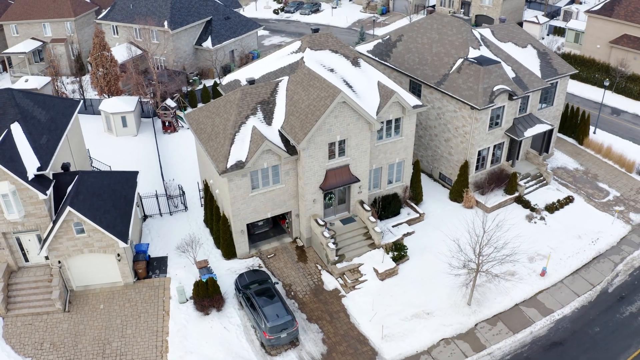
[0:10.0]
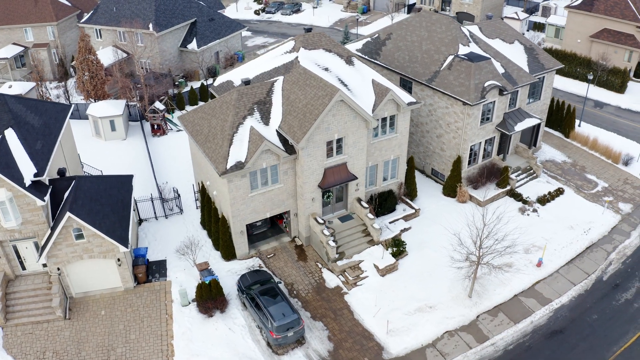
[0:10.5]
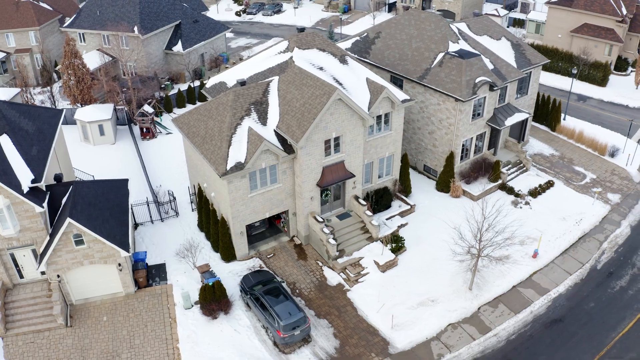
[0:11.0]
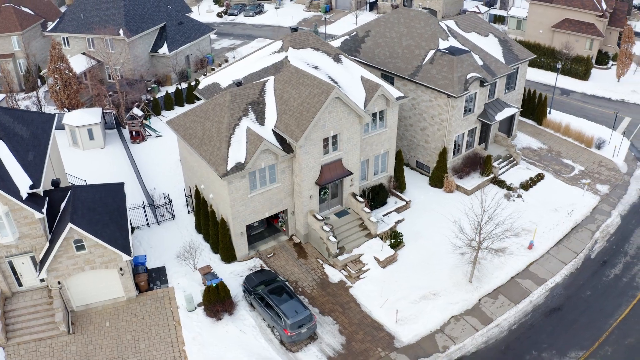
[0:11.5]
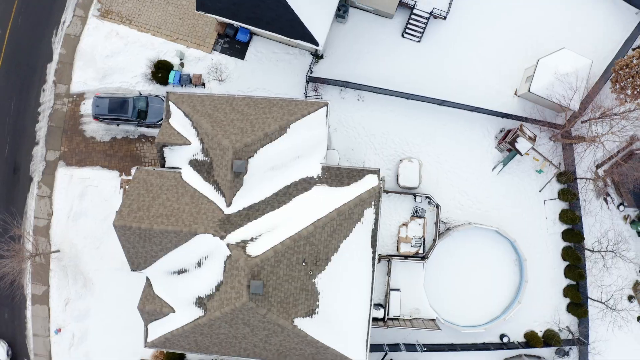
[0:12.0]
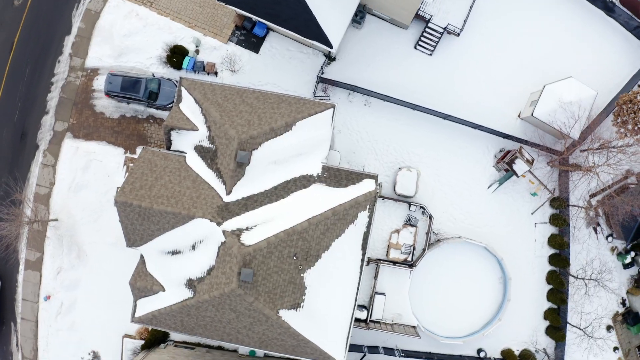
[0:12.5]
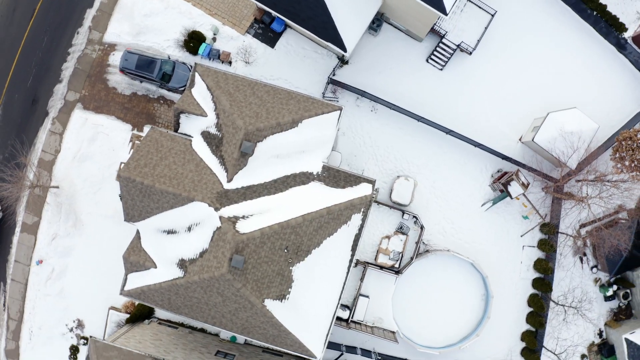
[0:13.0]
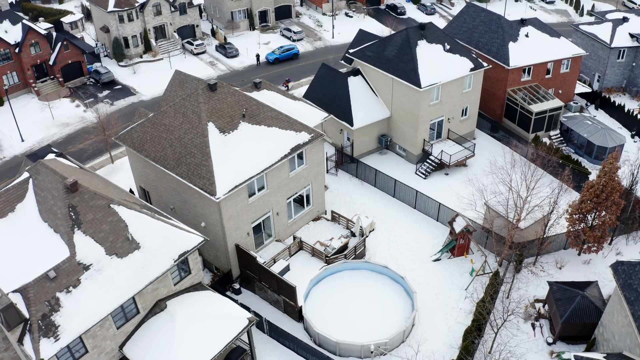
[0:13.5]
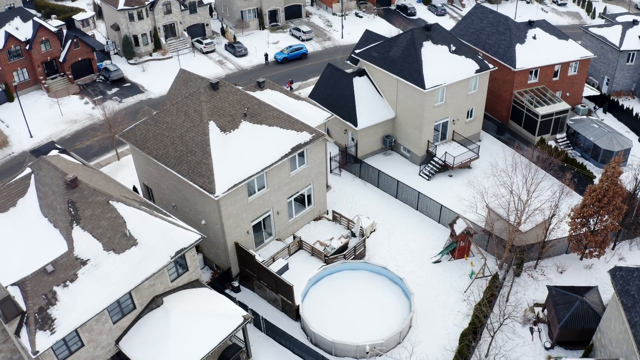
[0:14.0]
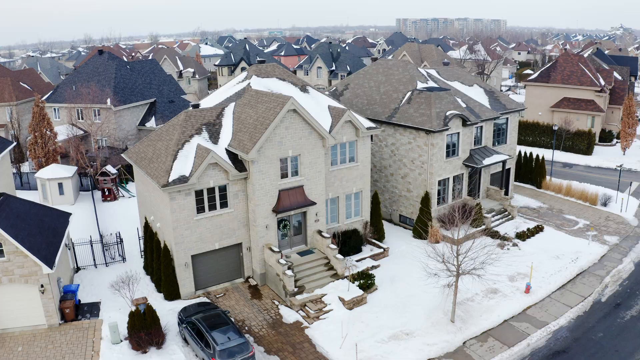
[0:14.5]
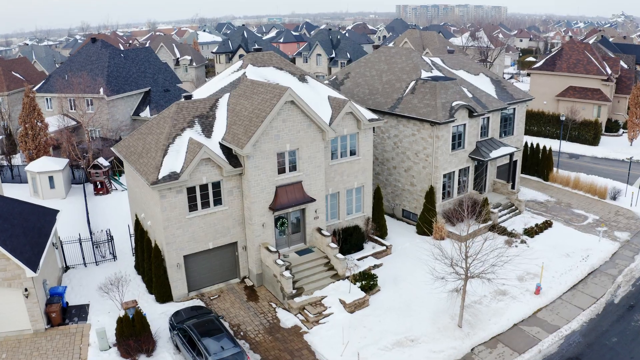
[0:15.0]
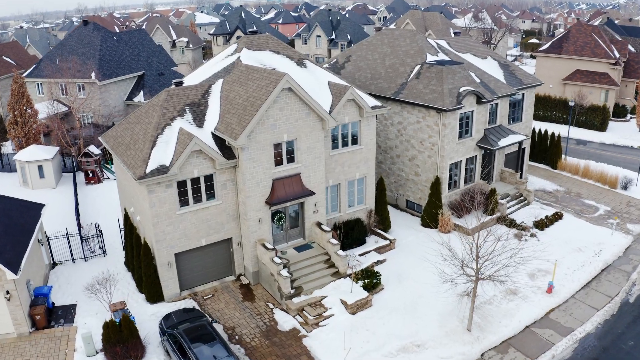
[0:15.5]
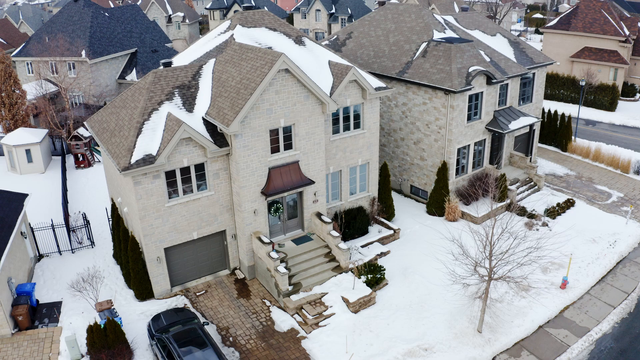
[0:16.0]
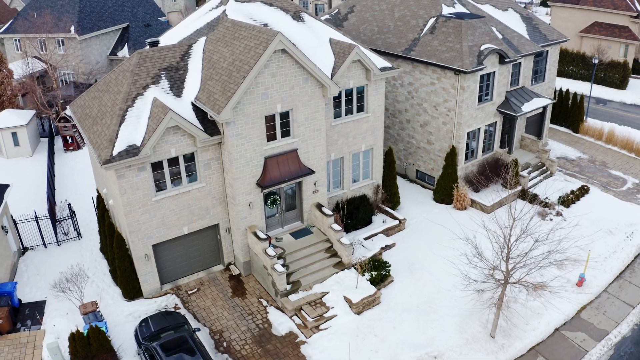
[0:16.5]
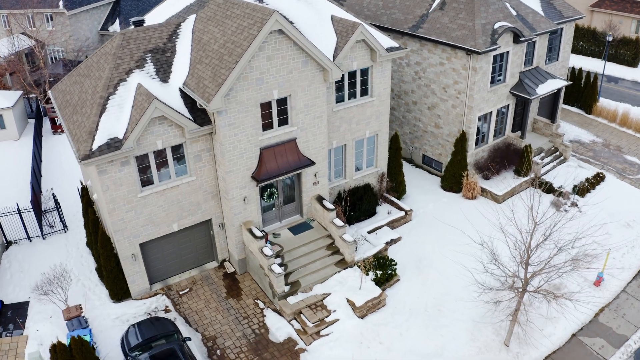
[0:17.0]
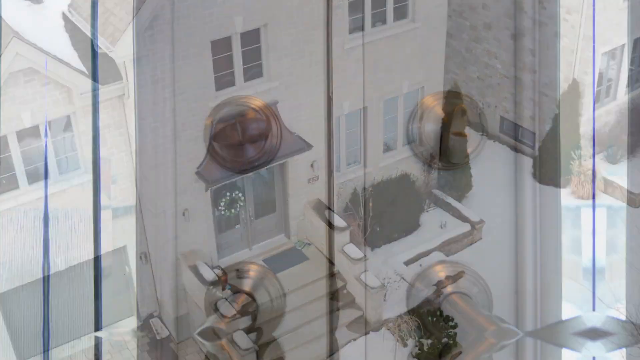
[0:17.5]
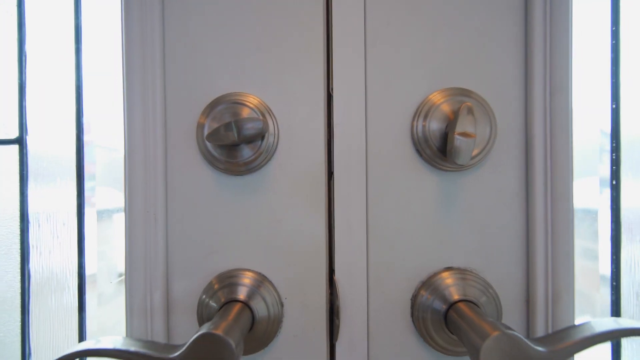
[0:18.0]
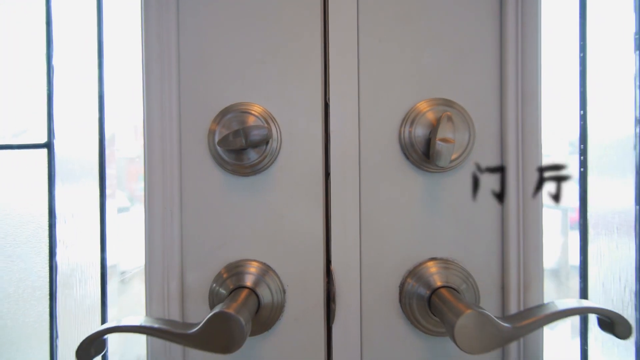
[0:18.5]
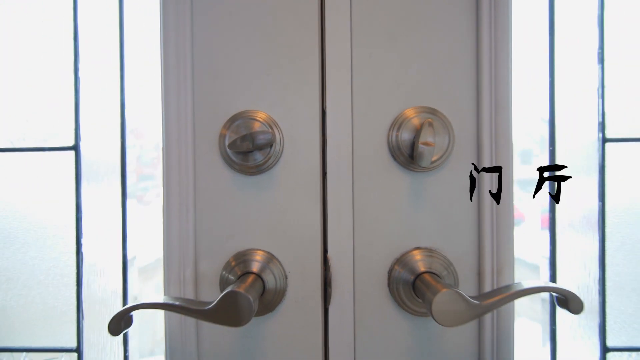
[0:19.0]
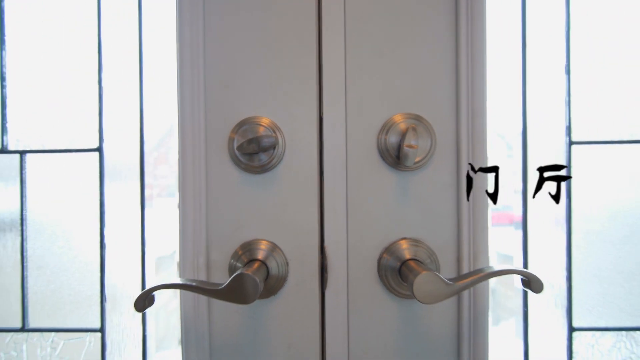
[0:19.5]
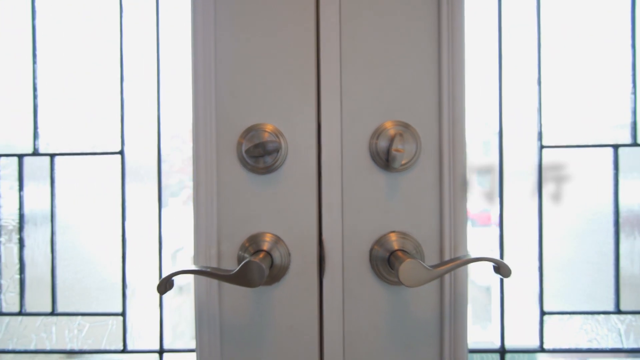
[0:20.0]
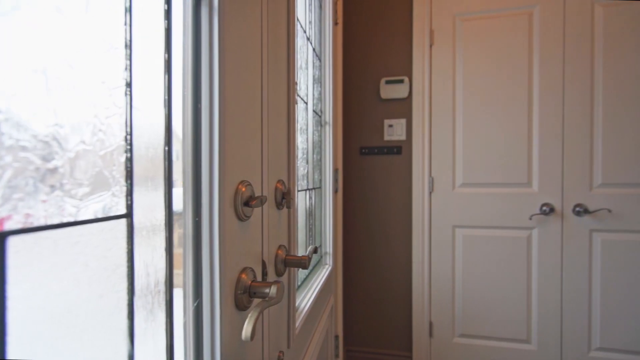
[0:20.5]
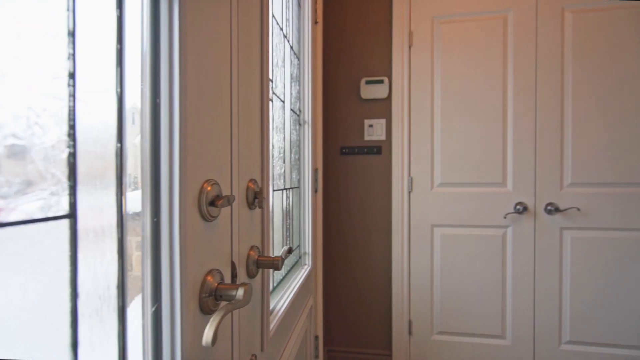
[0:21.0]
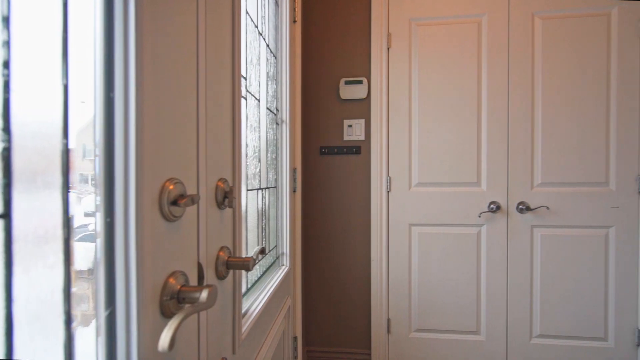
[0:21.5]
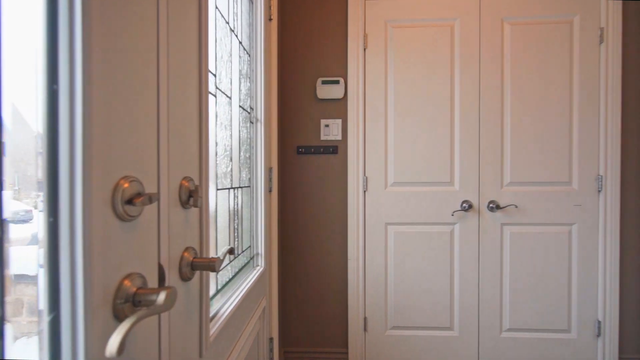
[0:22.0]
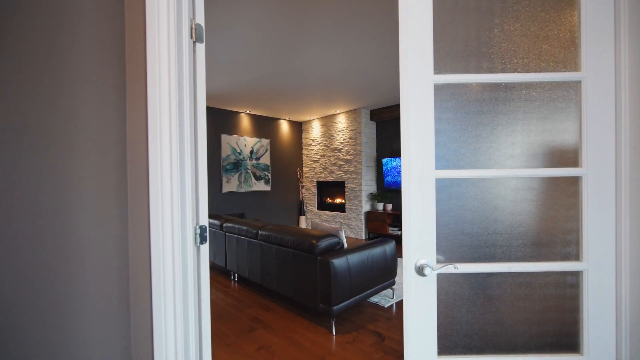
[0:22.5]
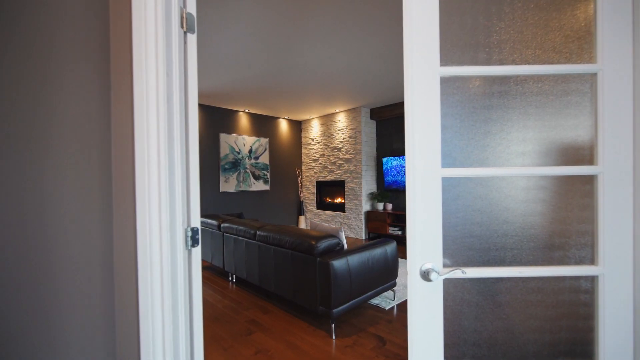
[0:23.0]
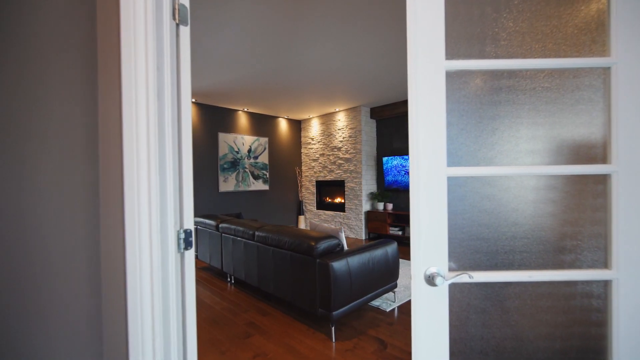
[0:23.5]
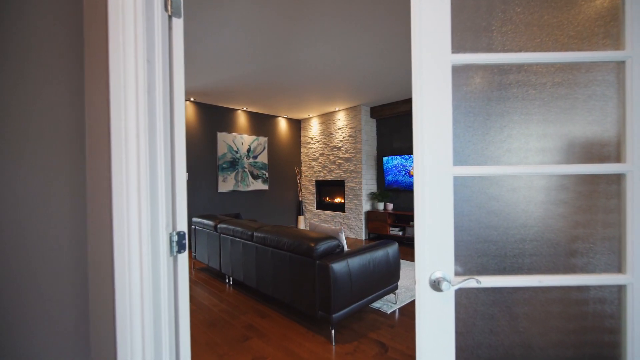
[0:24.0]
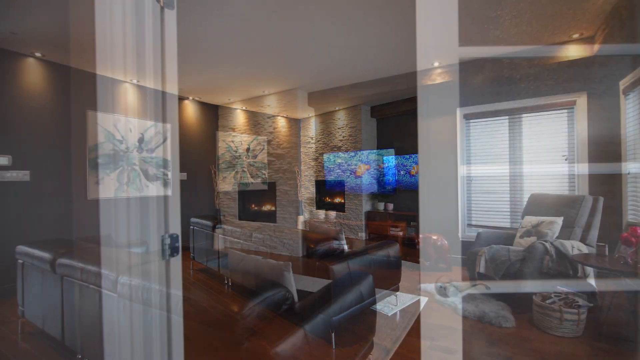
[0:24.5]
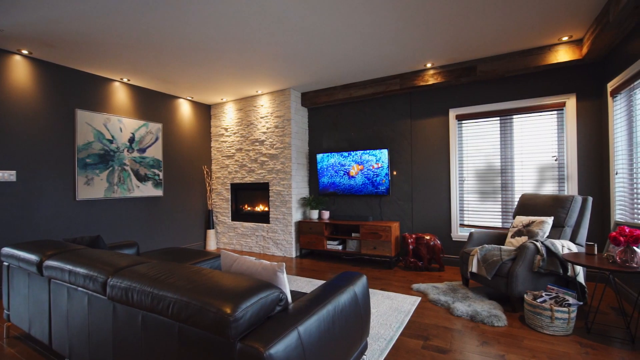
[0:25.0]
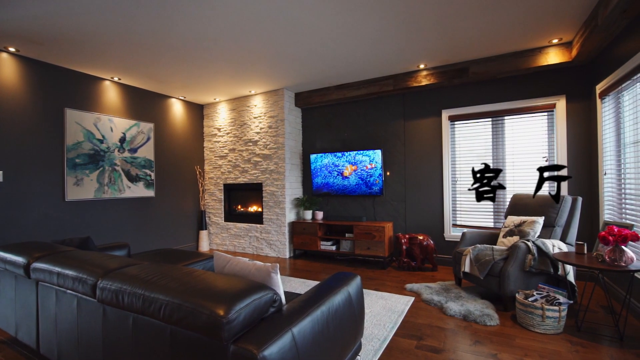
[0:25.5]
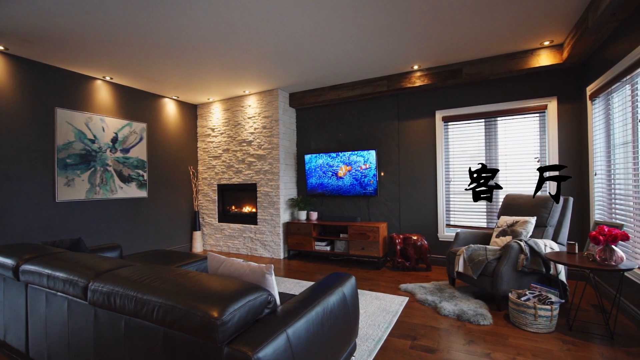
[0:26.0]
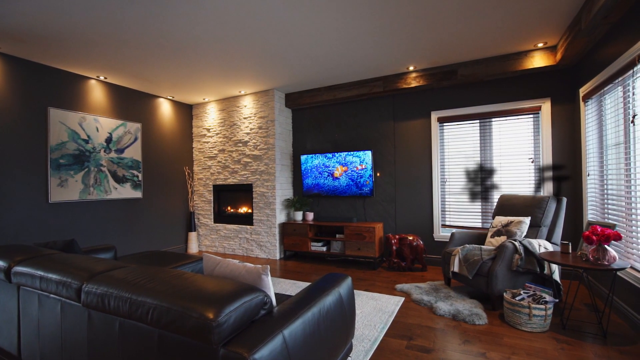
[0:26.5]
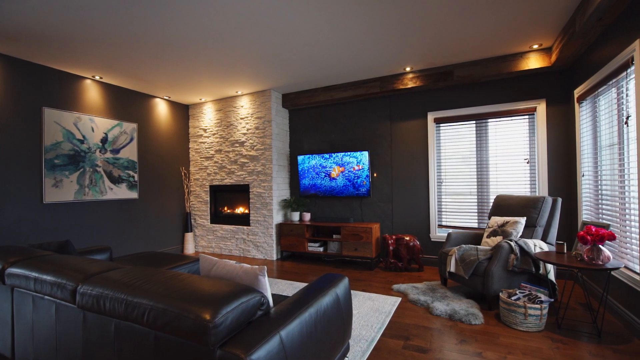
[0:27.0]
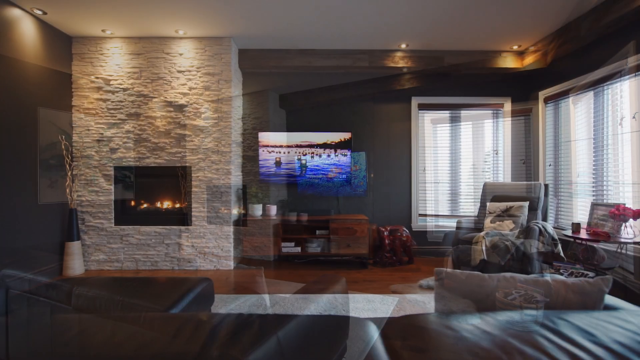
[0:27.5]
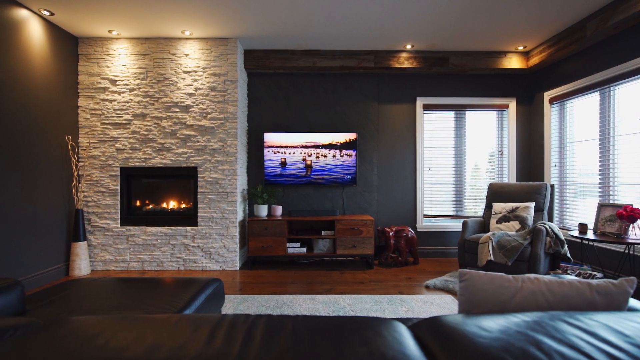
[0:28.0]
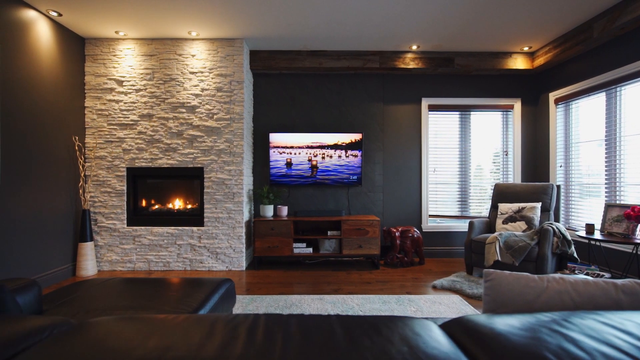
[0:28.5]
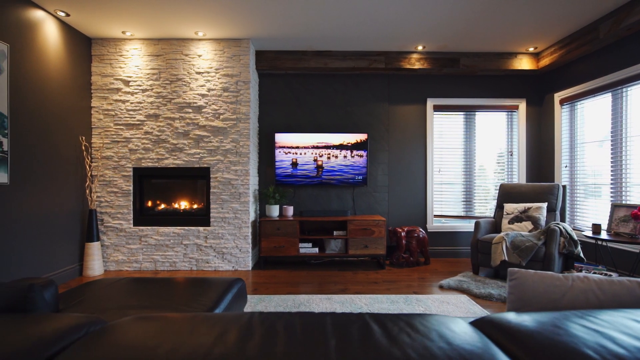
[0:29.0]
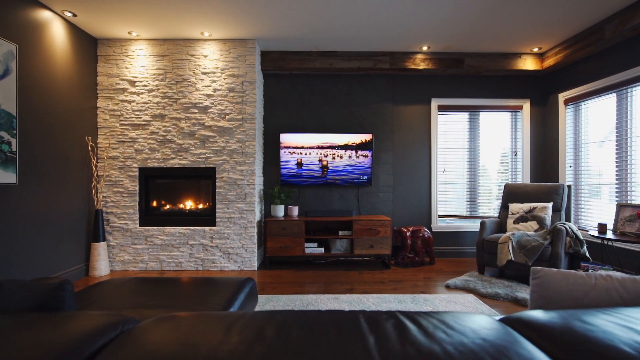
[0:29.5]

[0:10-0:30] The camera is up in the air over two houses and rotates slightly to the right. The next shot points downward at the roof of a house, then quickly changes and zooms in on two houses, lowering itself a little at a time. Next come two doorknobs and two door locks. The view moves inside the house and shows various rooms. A living room, which appears to be the family room, has a very dark sectional couch, a built-in fireplace, dark grey painted walls and dark hardwood flooring, shown from different angles. There is a TV in the back, a painting on the left-hand side, and two windows on the right-hand side, both covered with the blinds down.